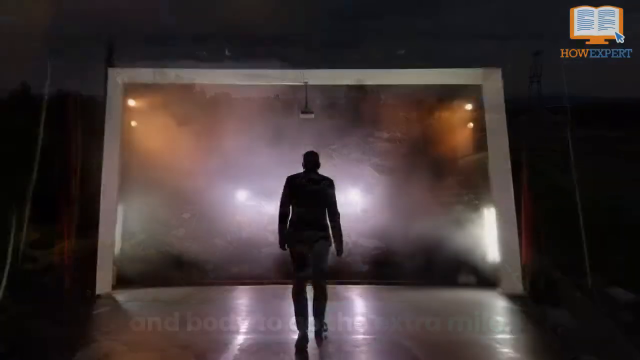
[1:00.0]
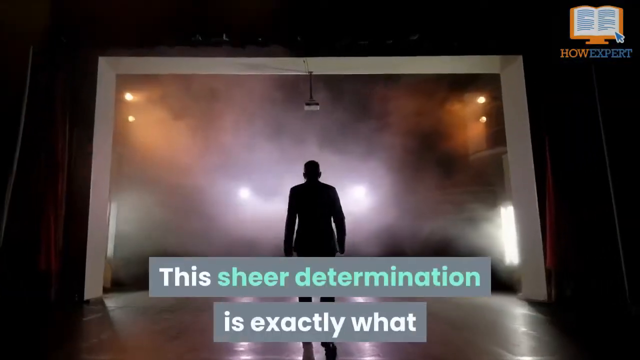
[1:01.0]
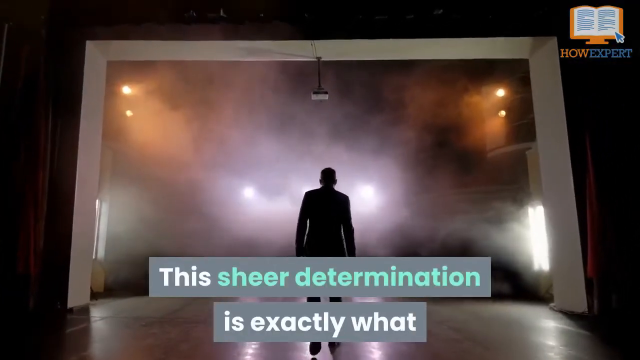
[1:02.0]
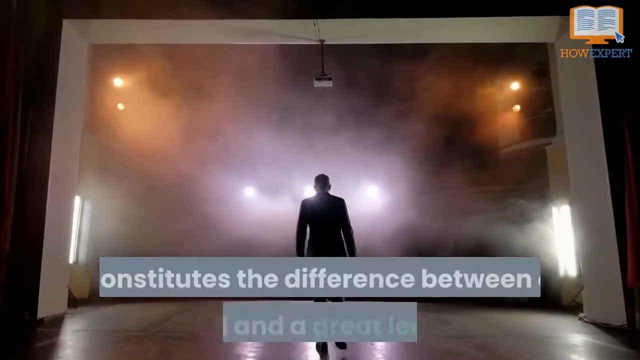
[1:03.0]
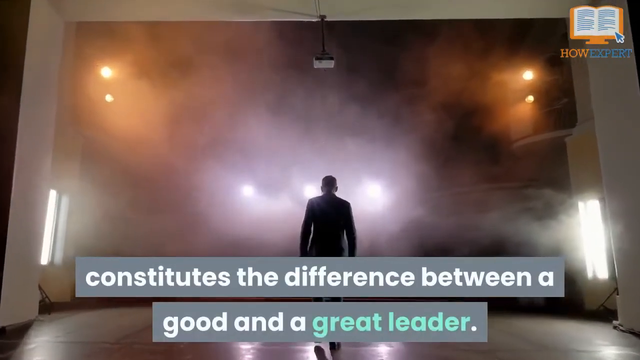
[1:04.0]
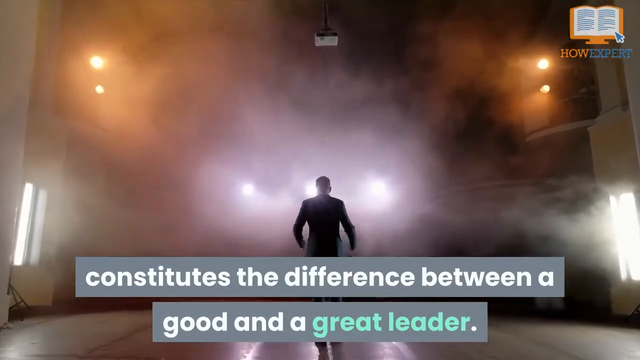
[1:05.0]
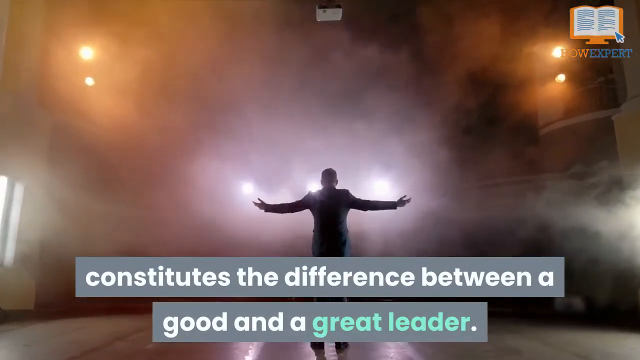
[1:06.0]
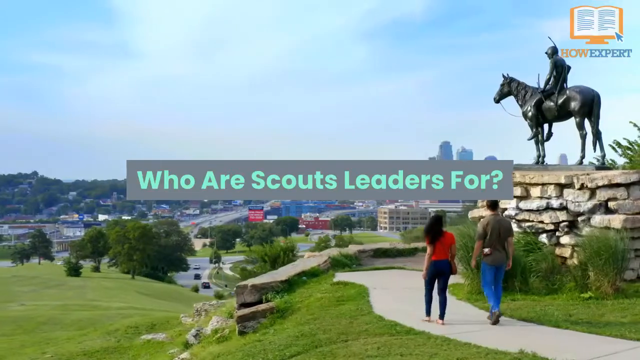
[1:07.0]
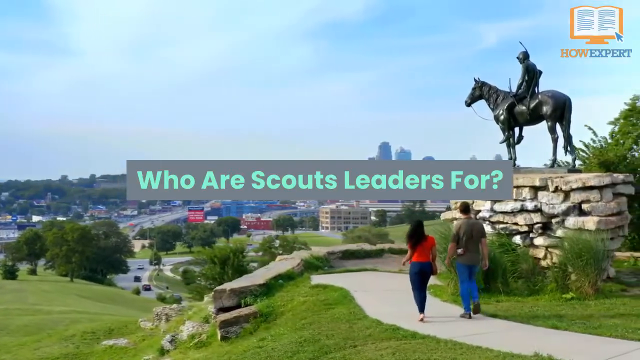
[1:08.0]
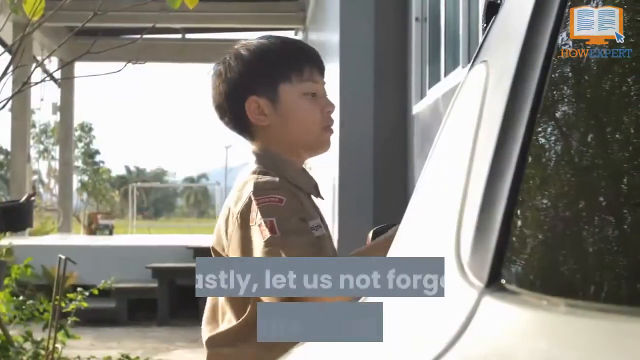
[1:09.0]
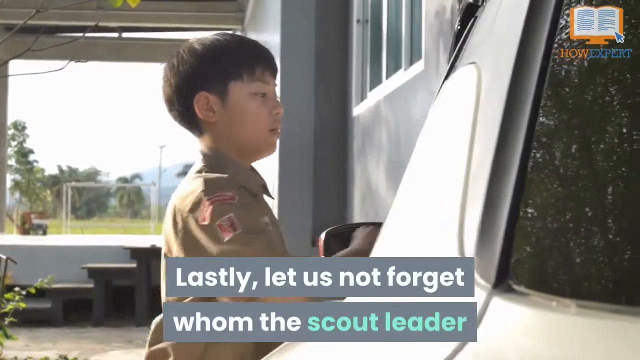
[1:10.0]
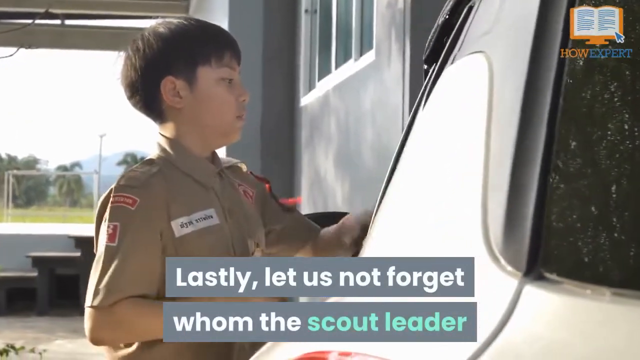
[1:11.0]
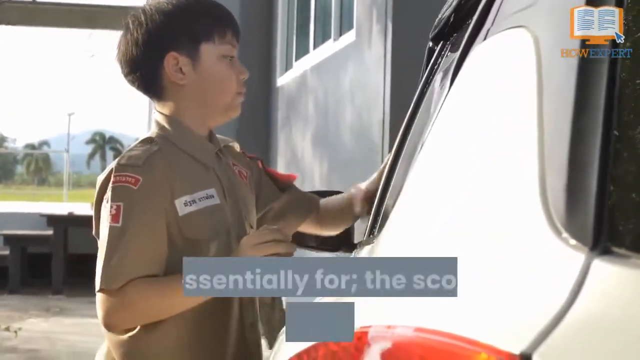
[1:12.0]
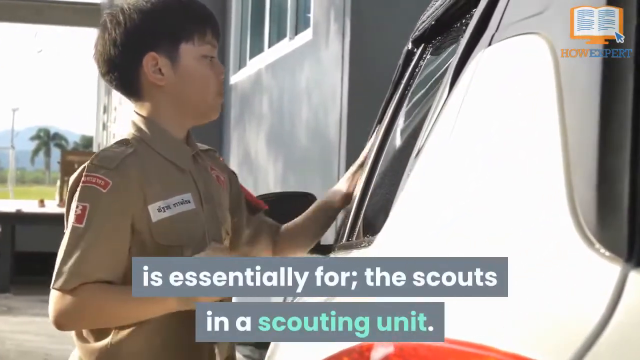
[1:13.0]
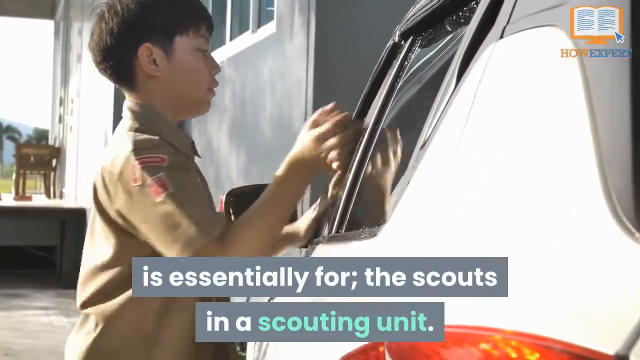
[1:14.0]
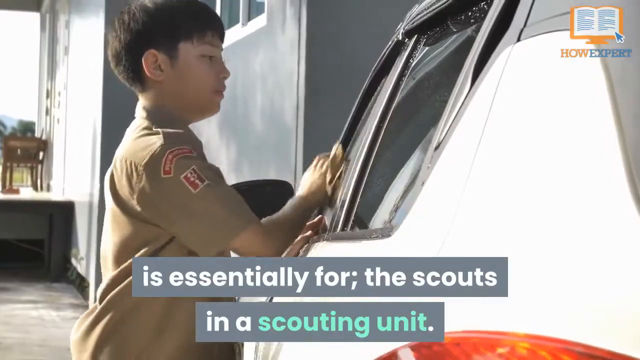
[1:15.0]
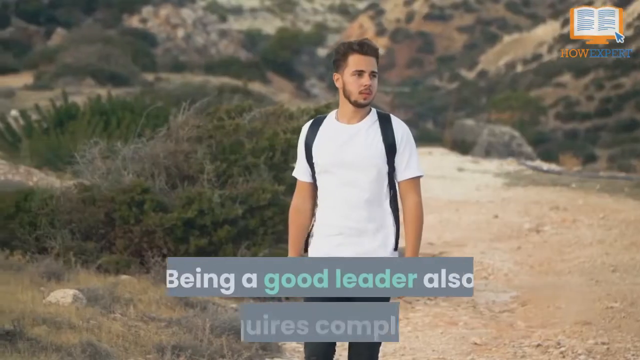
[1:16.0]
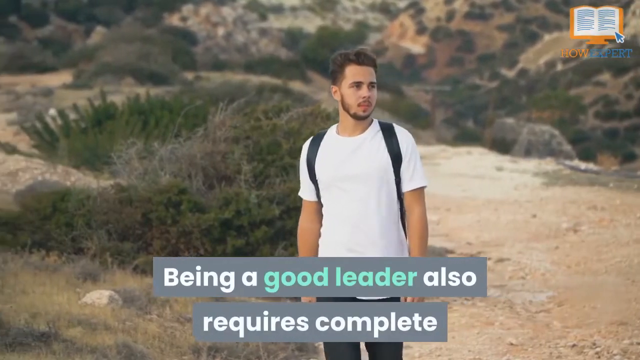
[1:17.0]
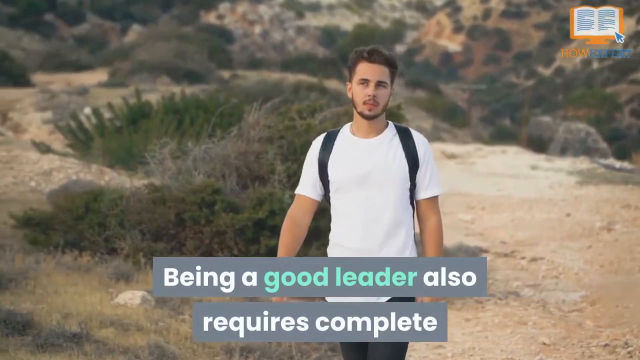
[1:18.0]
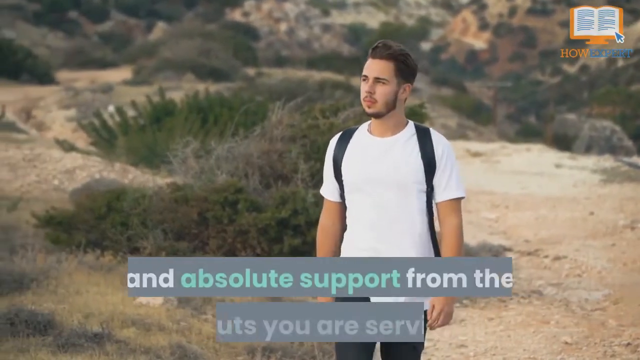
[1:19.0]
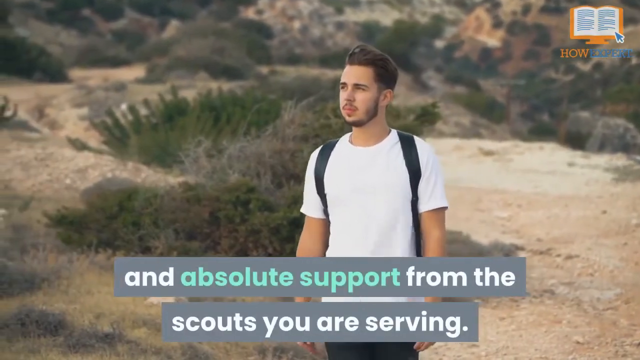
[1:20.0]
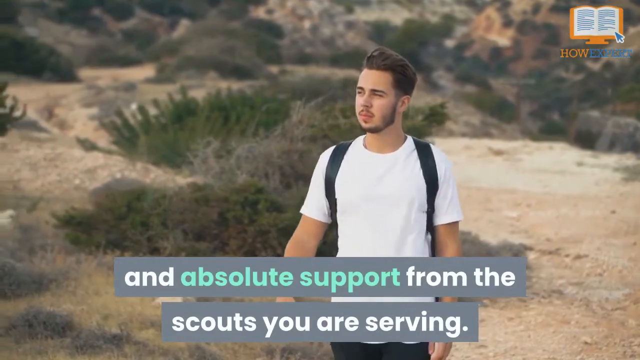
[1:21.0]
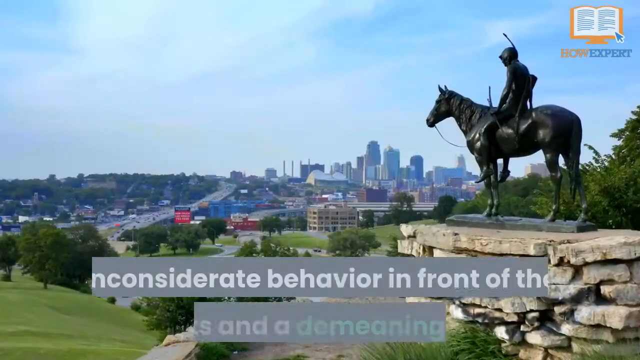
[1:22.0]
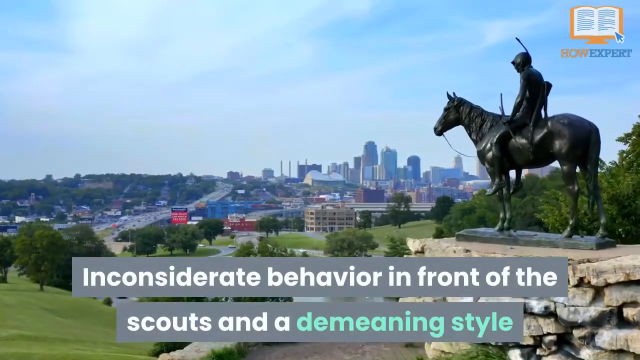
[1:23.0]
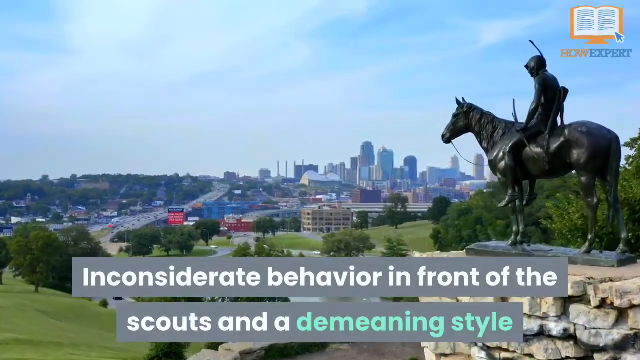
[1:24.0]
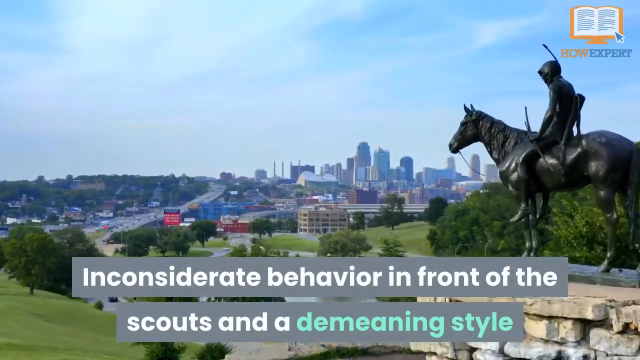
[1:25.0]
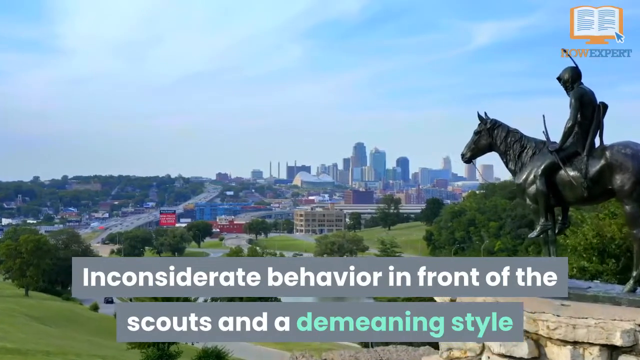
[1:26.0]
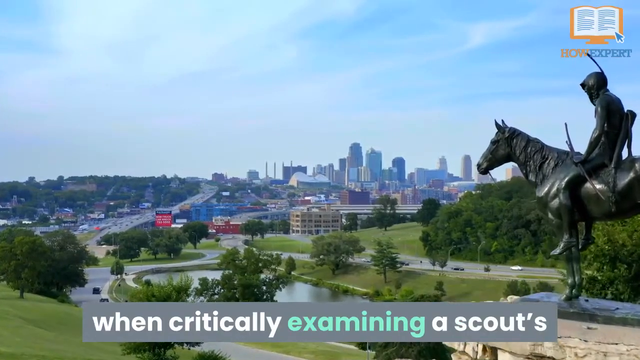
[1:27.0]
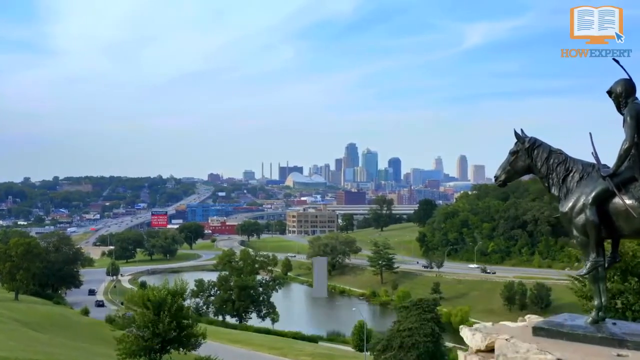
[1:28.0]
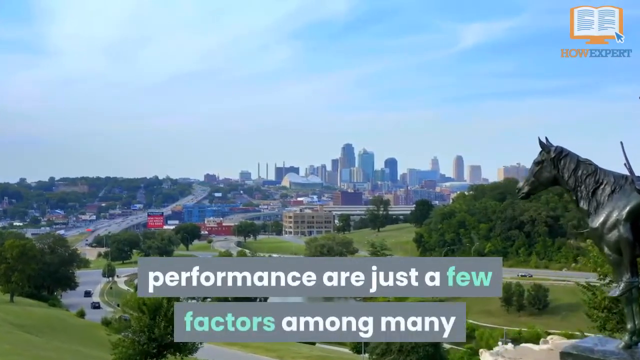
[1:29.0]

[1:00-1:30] What looks to be somebody walks onto a stage or into an arena; the person is just a black silhouette, and everything else is kind of black and obscured. Text reads "the sheer determination is exactly what constitutes the difference between a good and a great leader" as the person continues walking and throws his hands out. Text beginning "let us not forget" appears. A boy scout, apparently a little Asian boy in a little uniform, is outside washing a car, with a rag in his hand, working on the windows of the vehicle. Then text reads "being a good leader also requires complete and absolute support from the scouts you are serving." A man in a white shirt with a backpack is seemingly walking through the desert. The video returns to the horse on the hill, with the text "inconsiderate behavior in front of the scouts and a demeaning style when critically examining a scout's performance are just a few factors among many."